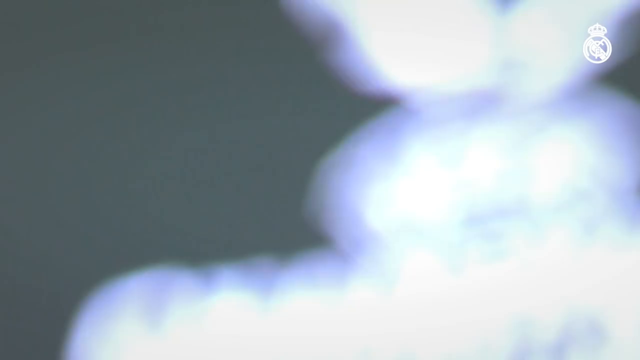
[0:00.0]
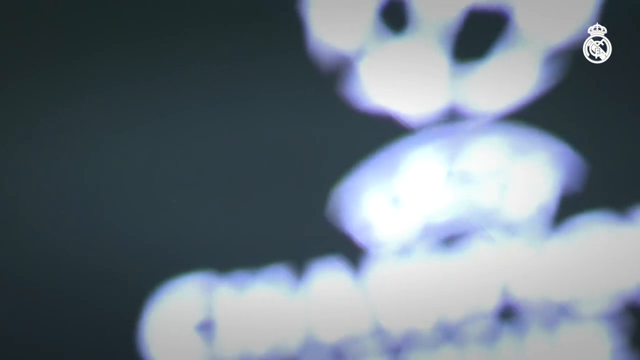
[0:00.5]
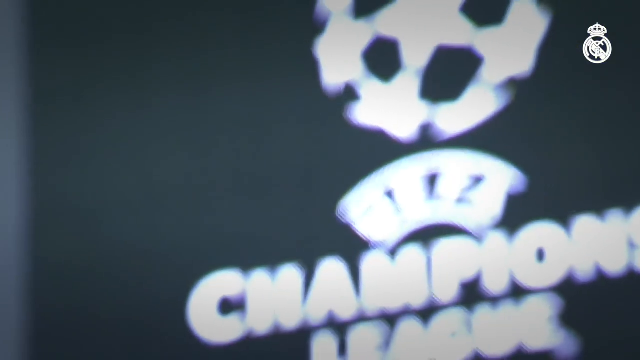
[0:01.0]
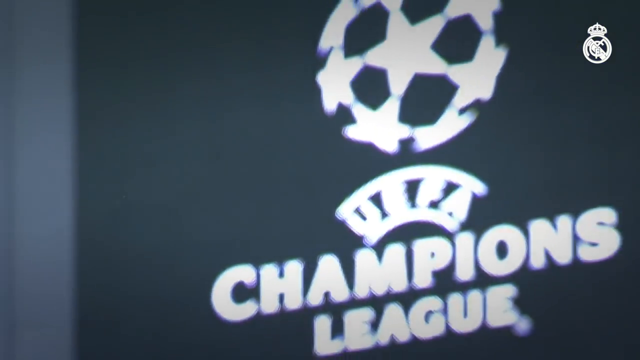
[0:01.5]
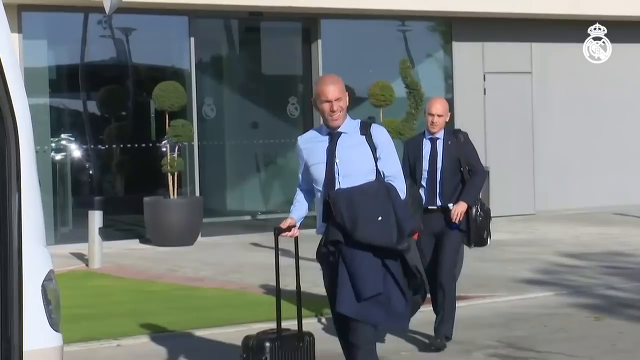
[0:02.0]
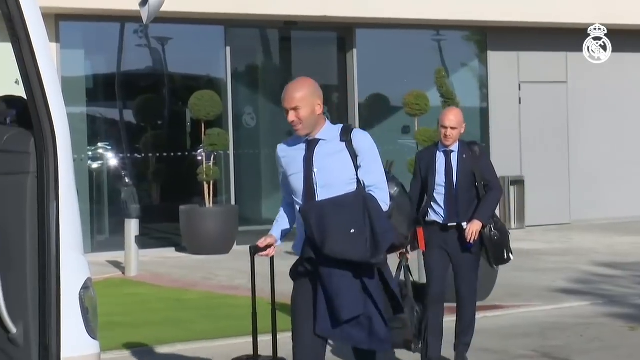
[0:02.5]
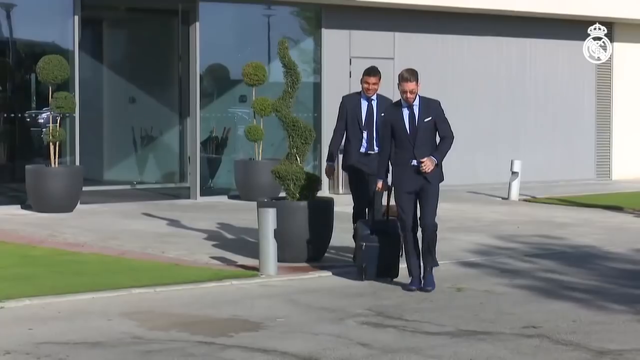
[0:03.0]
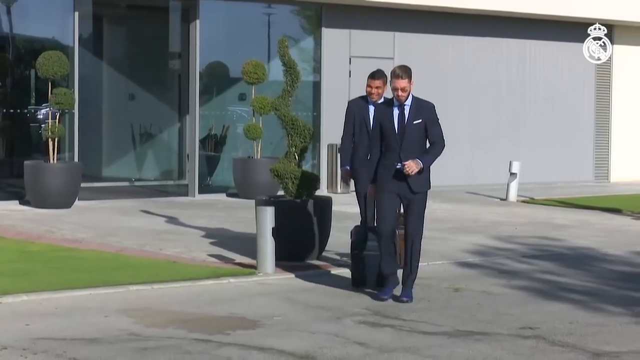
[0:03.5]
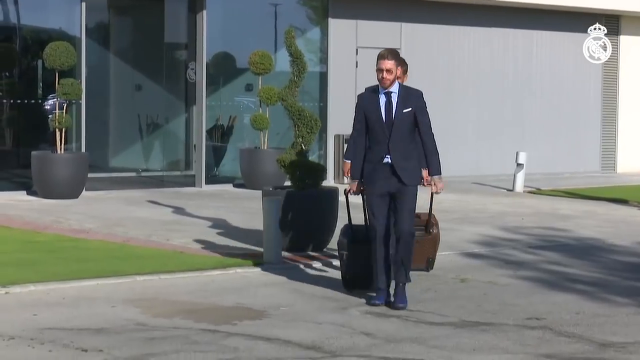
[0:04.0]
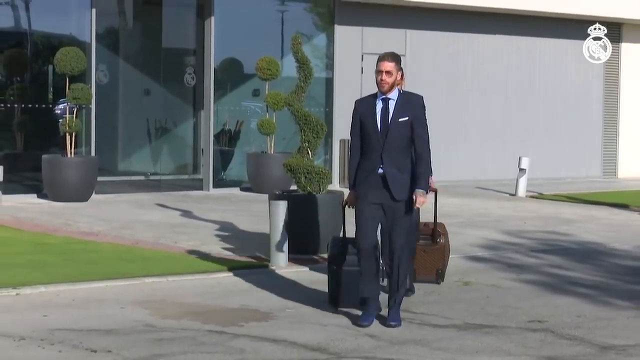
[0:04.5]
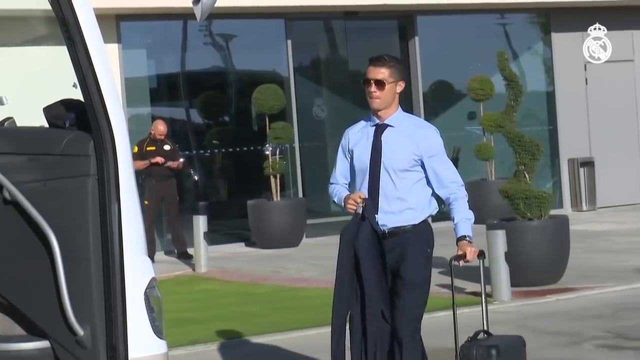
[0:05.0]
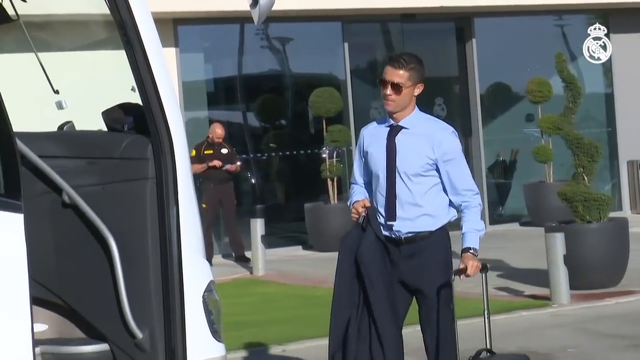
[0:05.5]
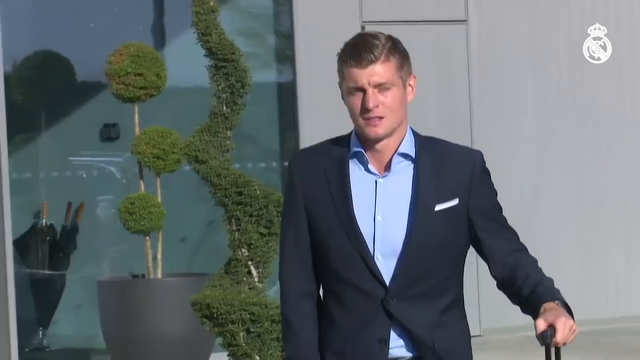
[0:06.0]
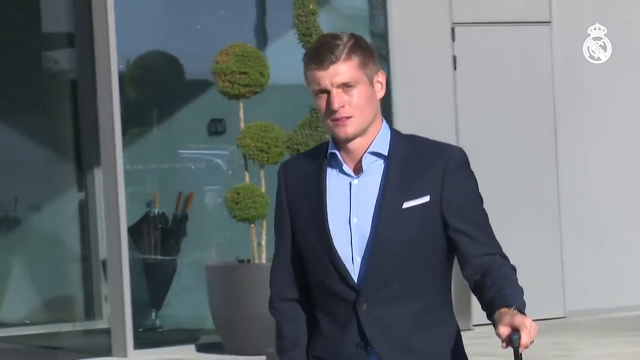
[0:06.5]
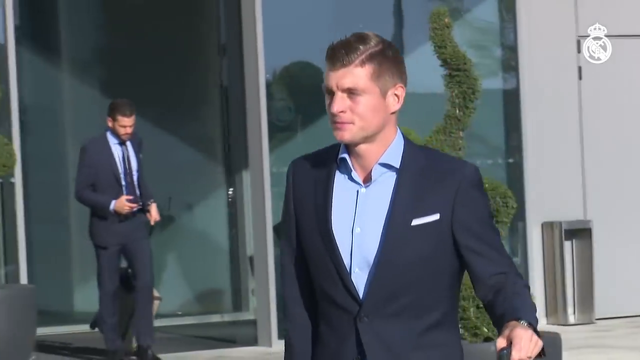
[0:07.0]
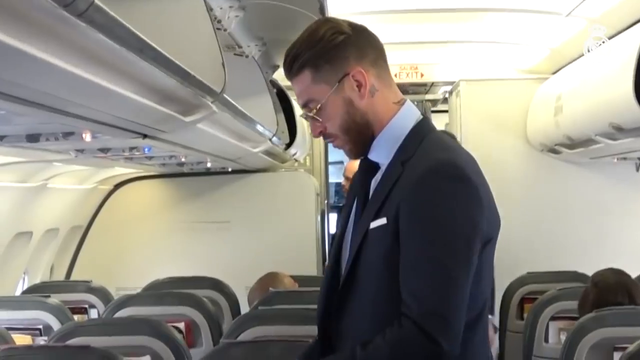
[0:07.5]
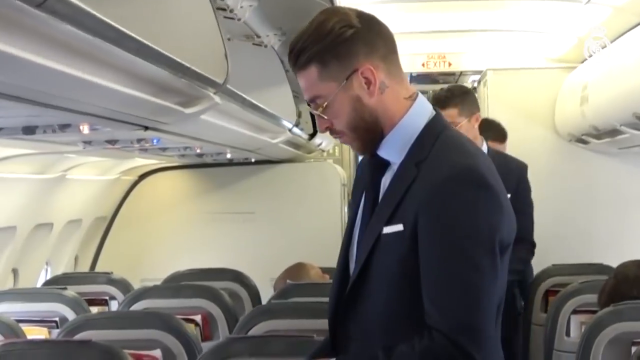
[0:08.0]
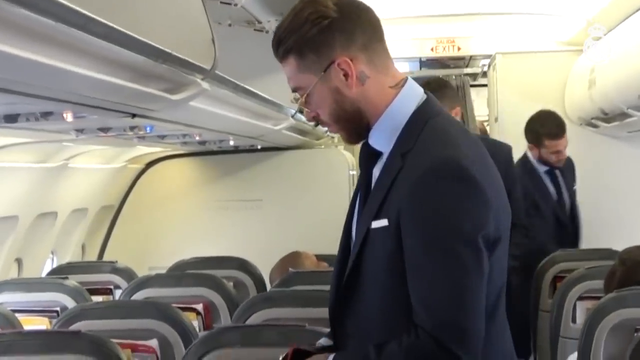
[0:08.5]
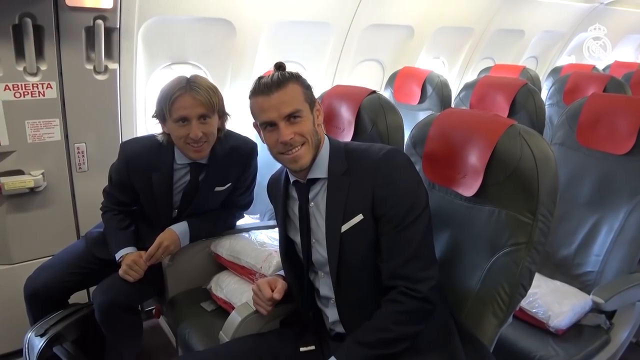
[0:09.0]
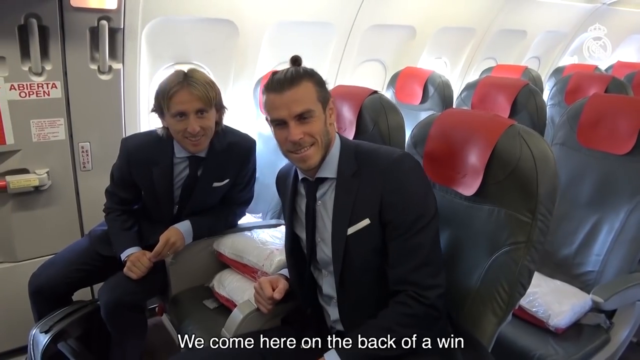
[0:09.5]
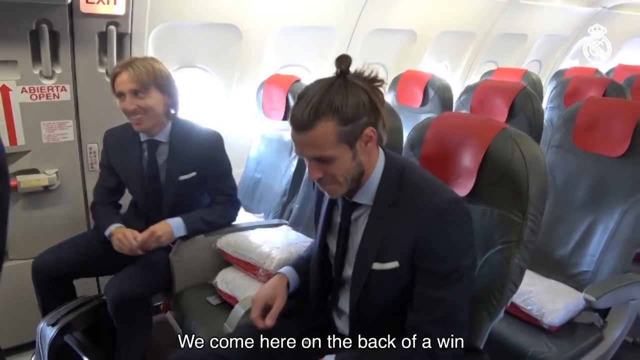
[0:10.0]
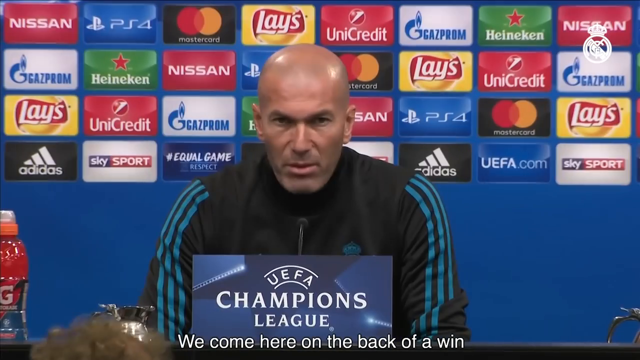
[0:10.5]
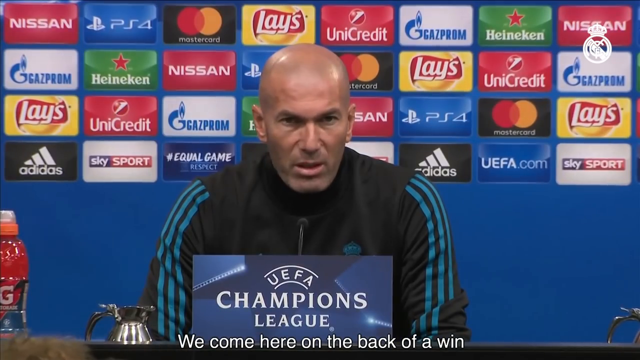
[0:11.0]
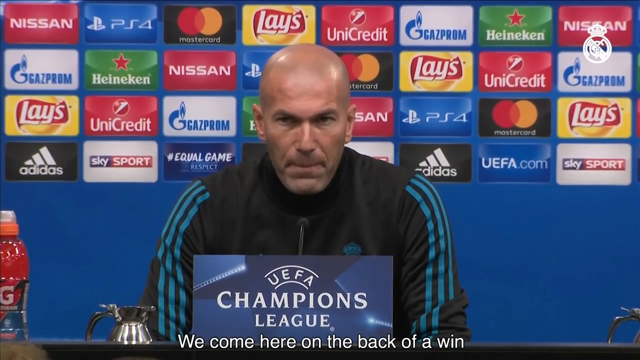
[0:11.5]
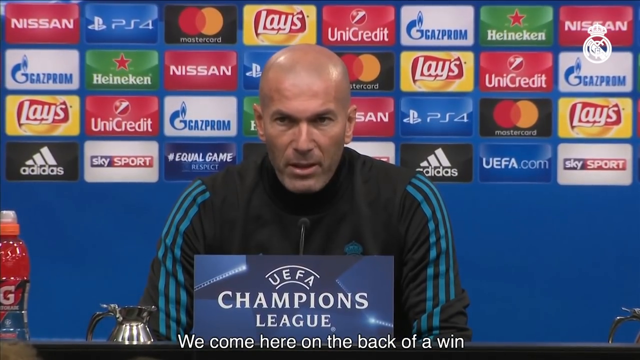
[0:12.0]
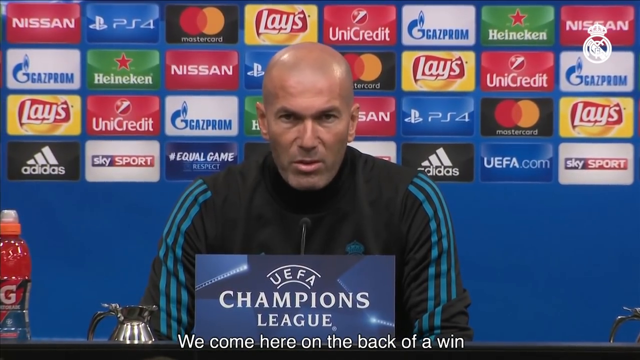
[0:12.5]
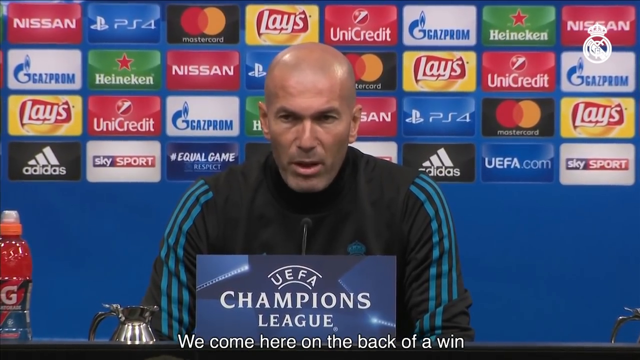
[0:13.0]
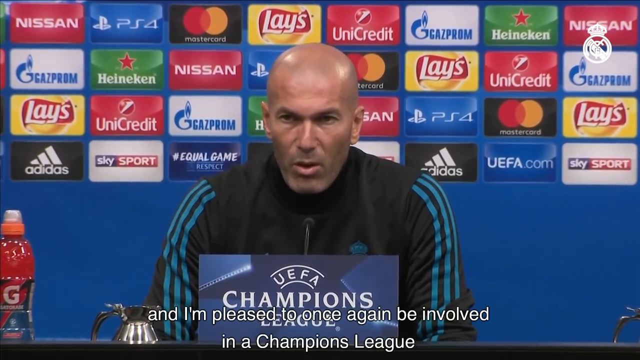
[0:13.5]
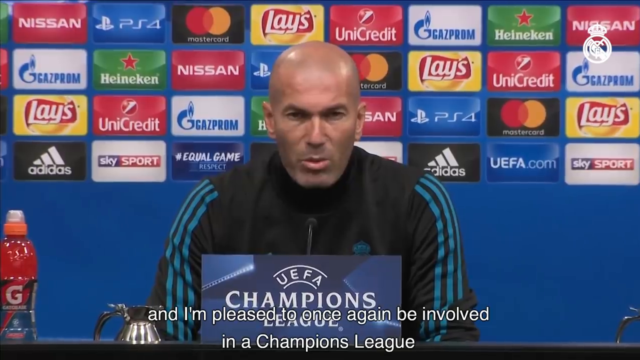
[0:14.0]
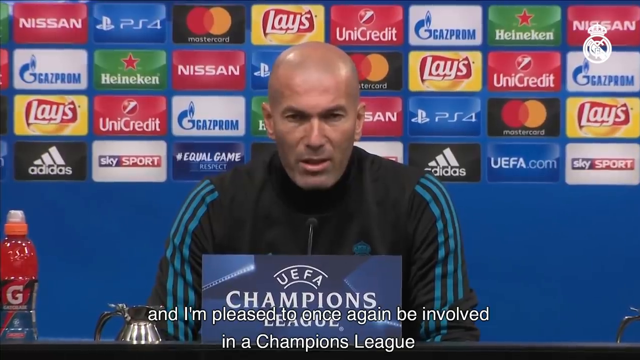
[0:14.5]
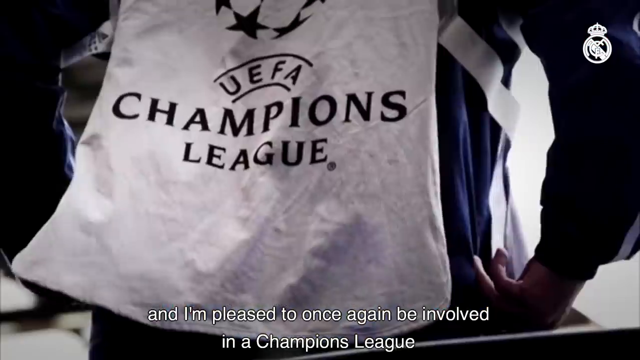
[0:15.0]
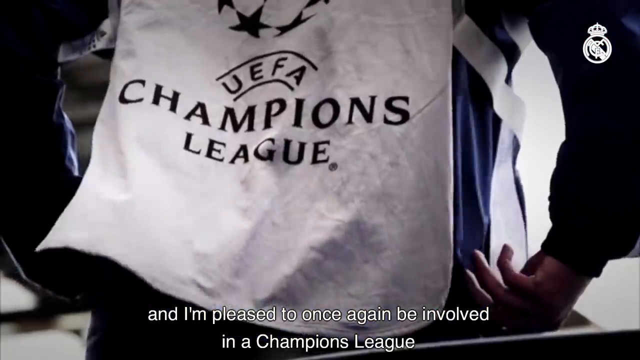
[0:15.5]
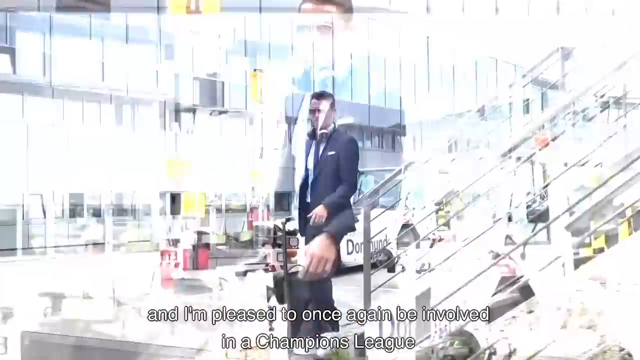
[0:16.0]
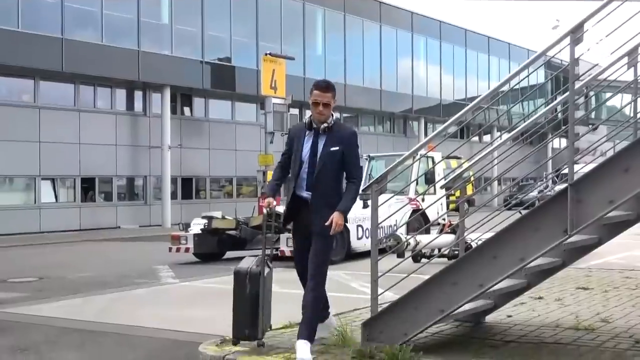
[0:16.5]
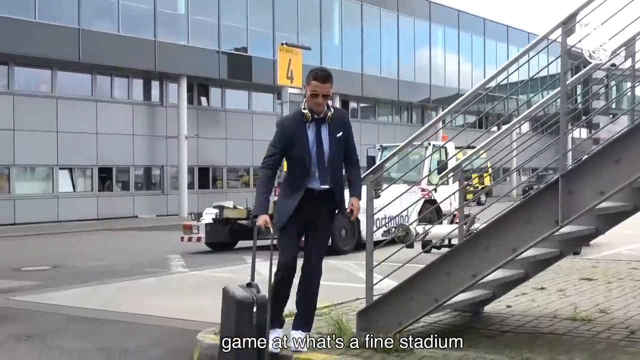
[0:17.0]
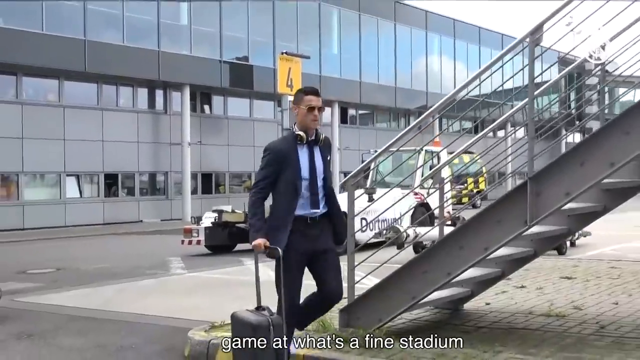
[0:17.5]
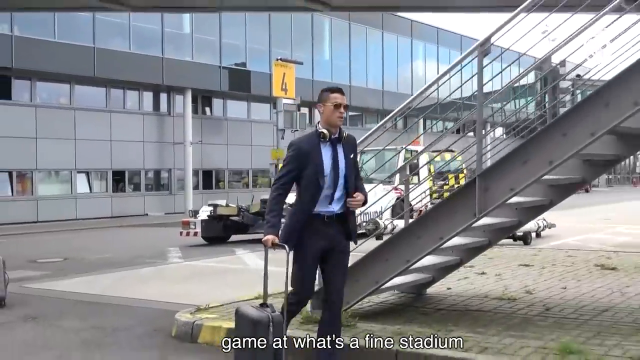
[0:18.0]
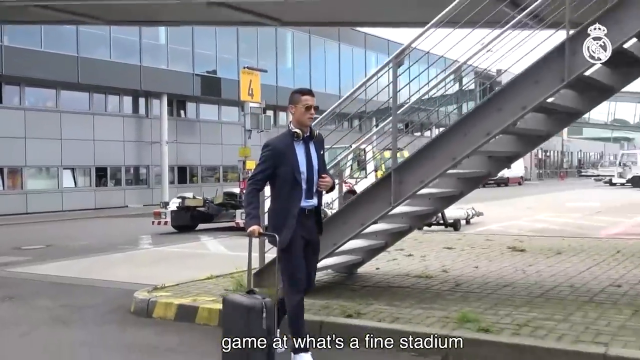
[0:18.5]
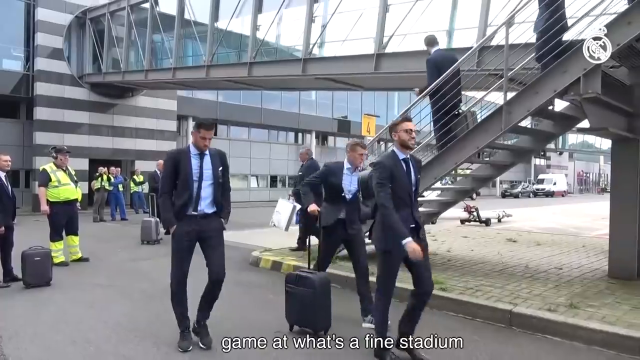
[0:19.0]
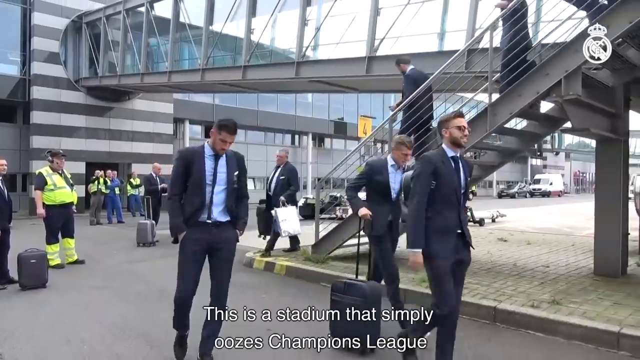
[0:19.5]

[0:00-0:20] The video begins with a blurry image that comes into focus: a UEFA Champions League graphic with a soccer ball above the text. It transitions to various people exiting a building with suitcases; they are dressed in suits and look well put together. One of them appears to be entering a bus. The scene then transitions to a man in a press conference setting. He is sitting behind a placard that says "UEFA Champions League", and behind him are logos for various companies and products such as Lays, Adidas and Unicredit.